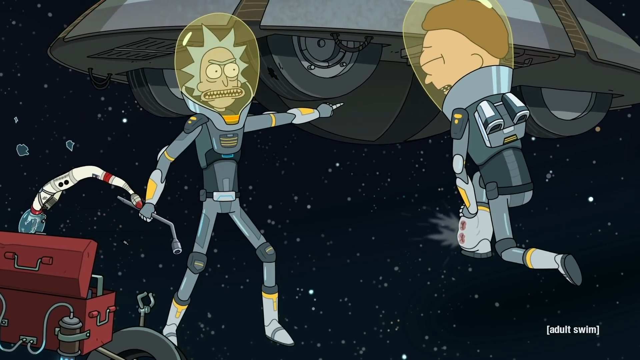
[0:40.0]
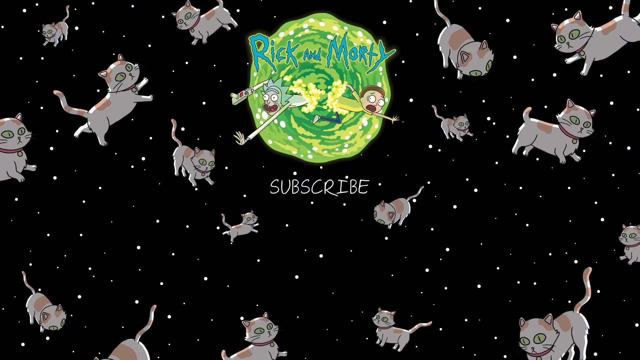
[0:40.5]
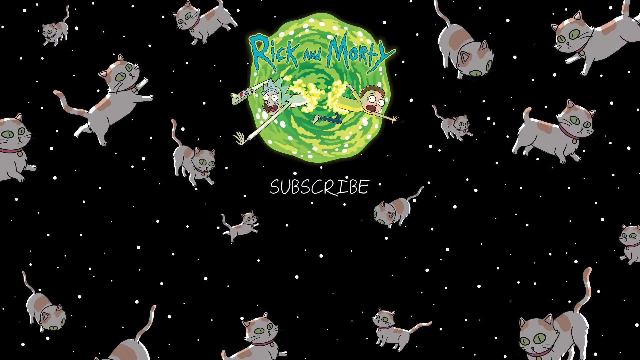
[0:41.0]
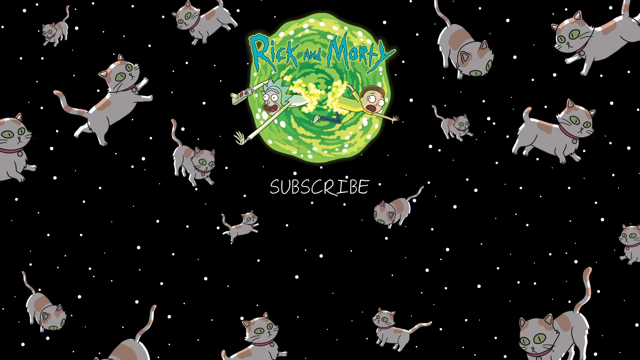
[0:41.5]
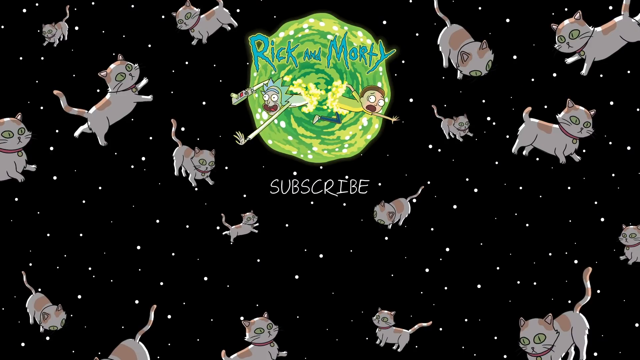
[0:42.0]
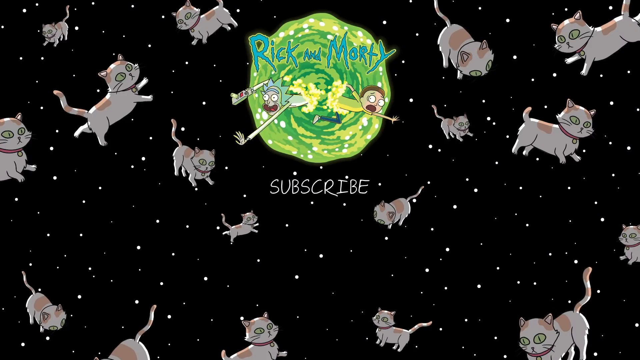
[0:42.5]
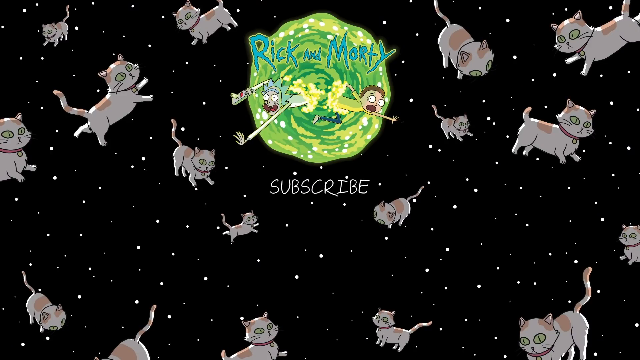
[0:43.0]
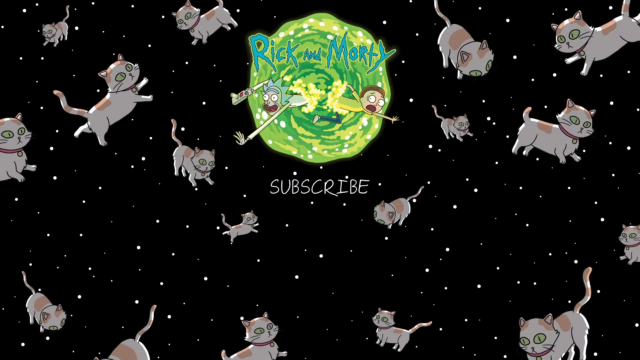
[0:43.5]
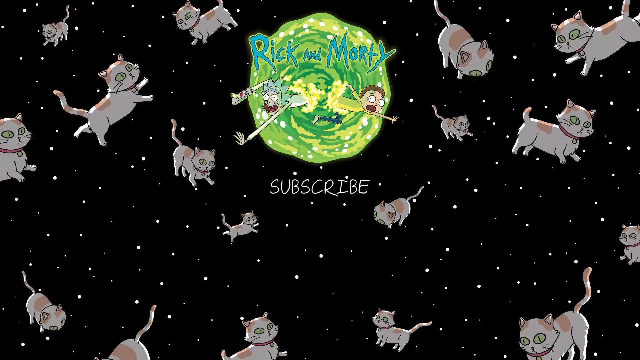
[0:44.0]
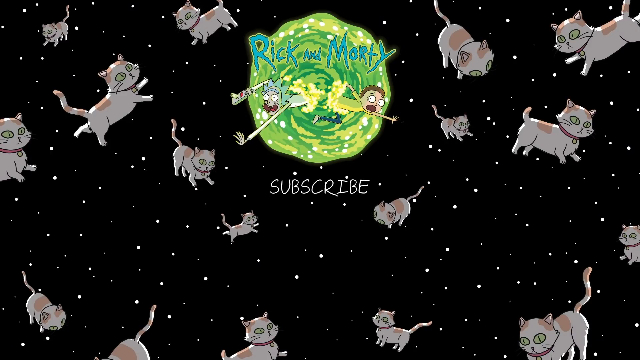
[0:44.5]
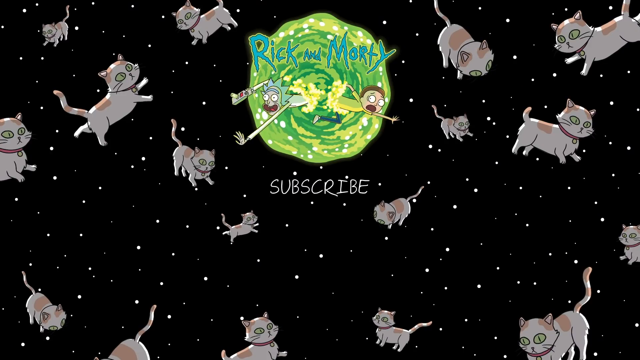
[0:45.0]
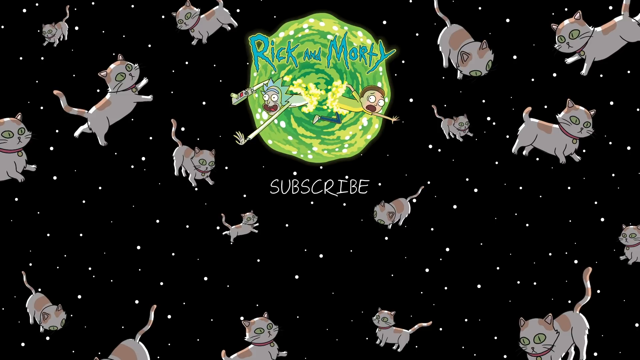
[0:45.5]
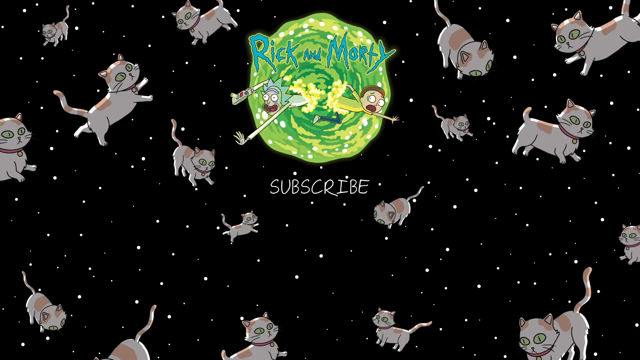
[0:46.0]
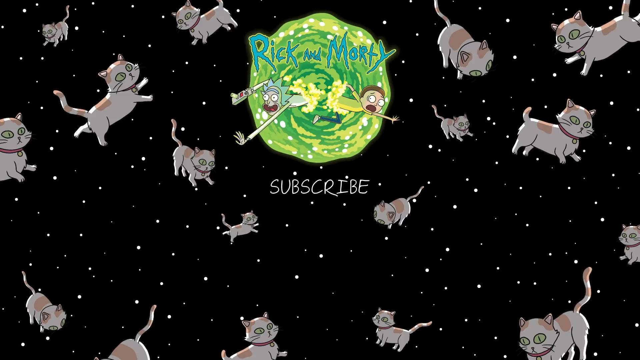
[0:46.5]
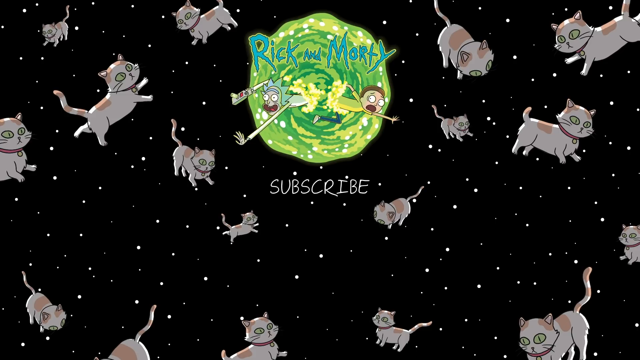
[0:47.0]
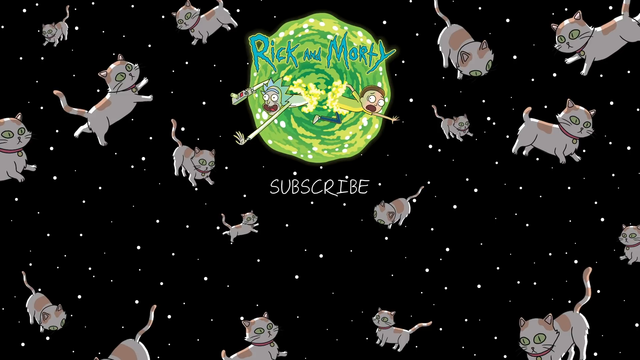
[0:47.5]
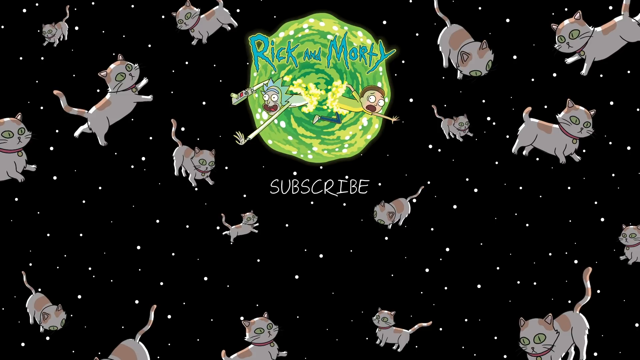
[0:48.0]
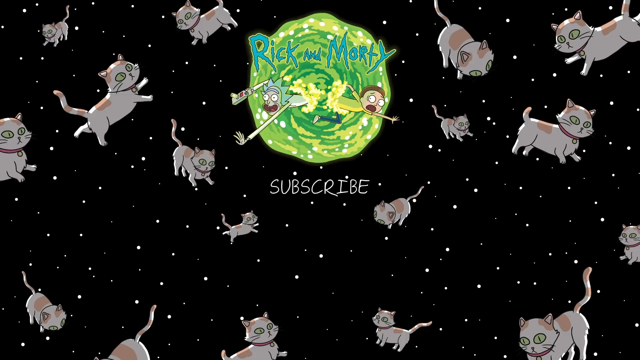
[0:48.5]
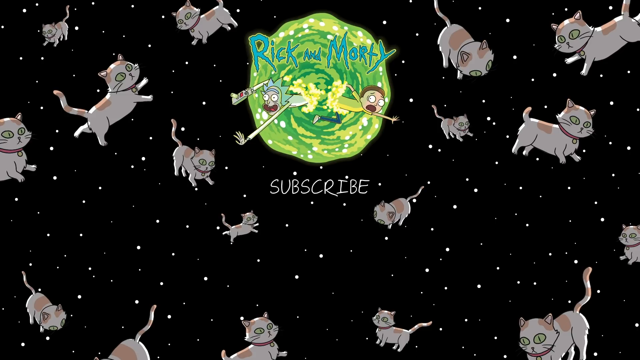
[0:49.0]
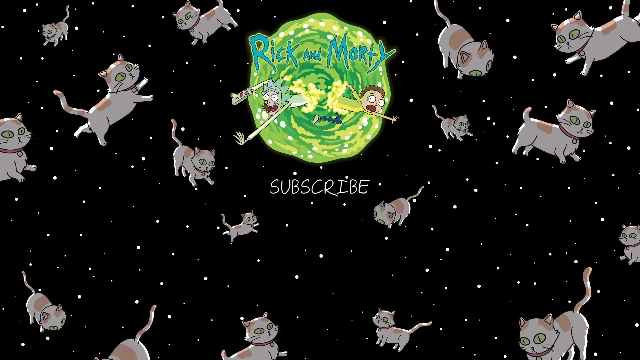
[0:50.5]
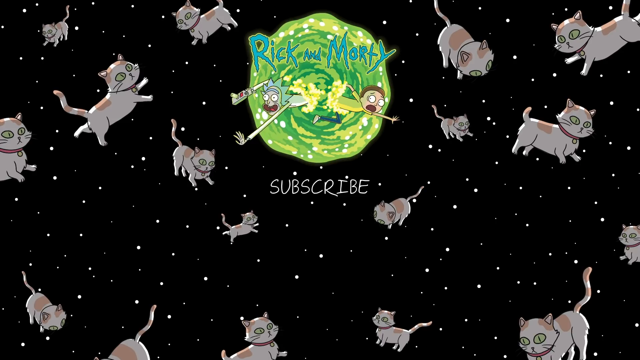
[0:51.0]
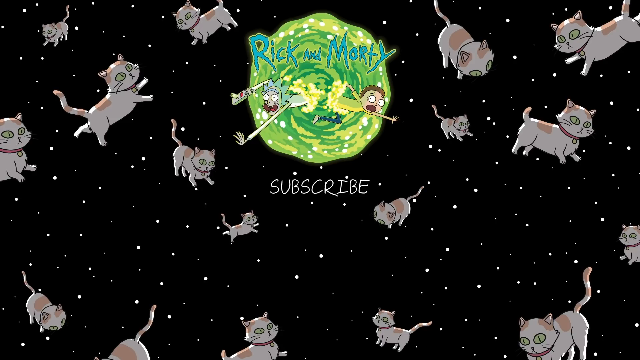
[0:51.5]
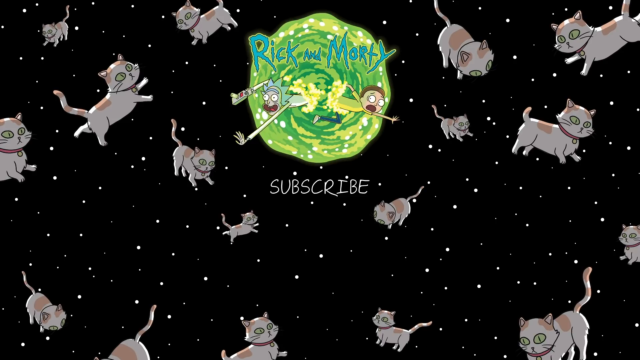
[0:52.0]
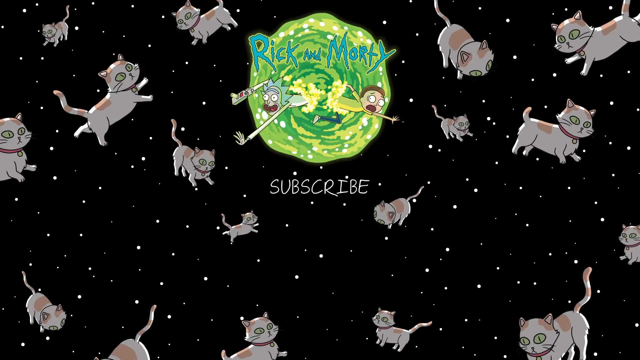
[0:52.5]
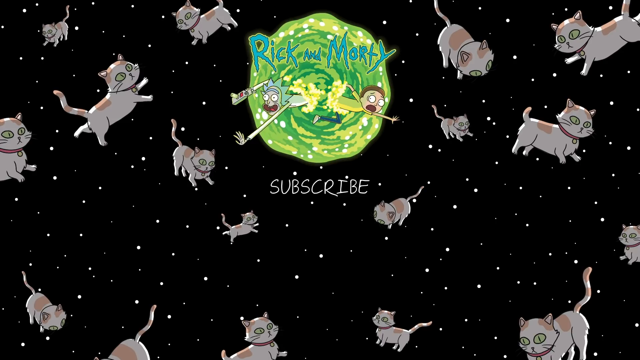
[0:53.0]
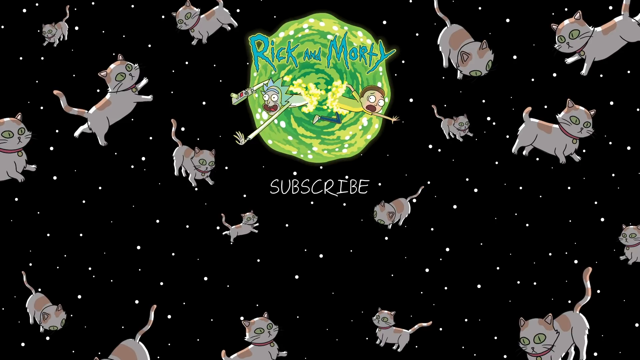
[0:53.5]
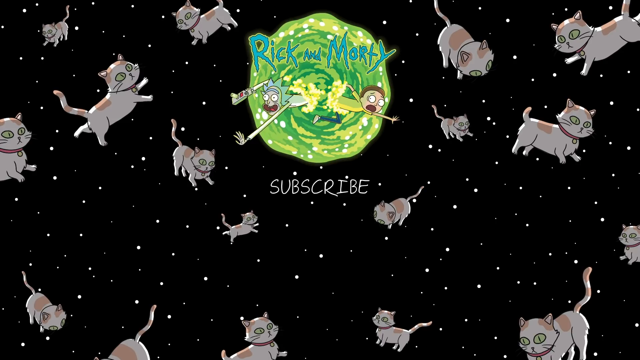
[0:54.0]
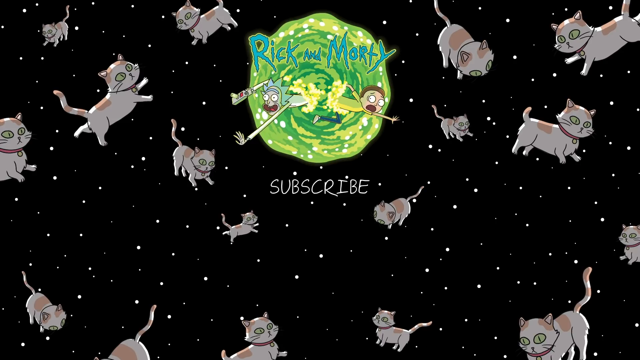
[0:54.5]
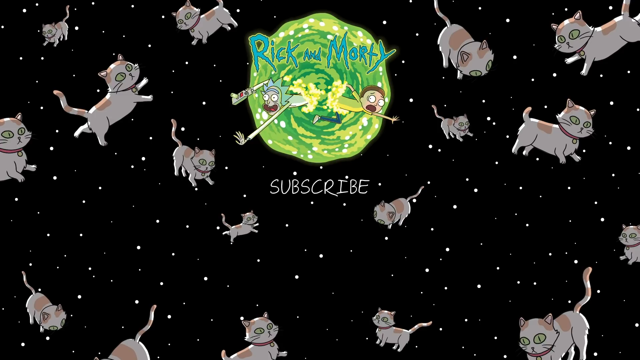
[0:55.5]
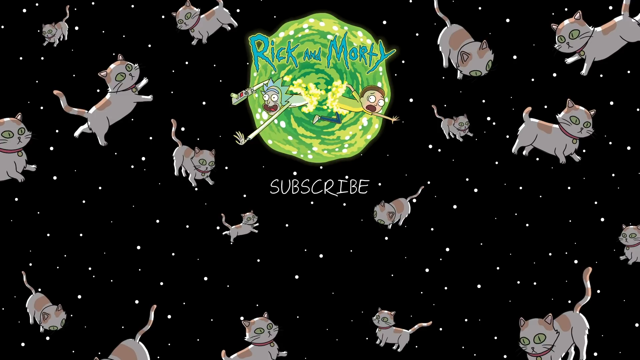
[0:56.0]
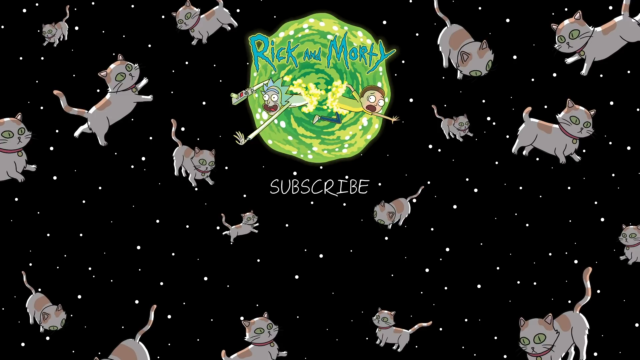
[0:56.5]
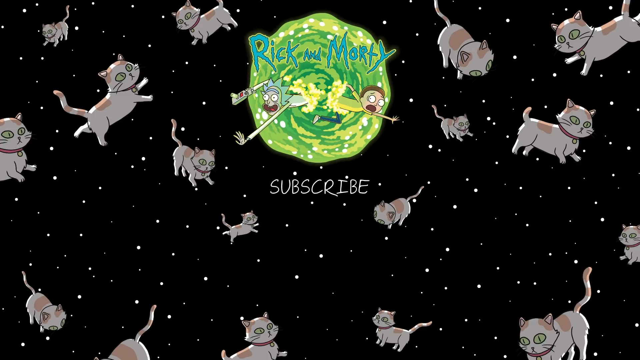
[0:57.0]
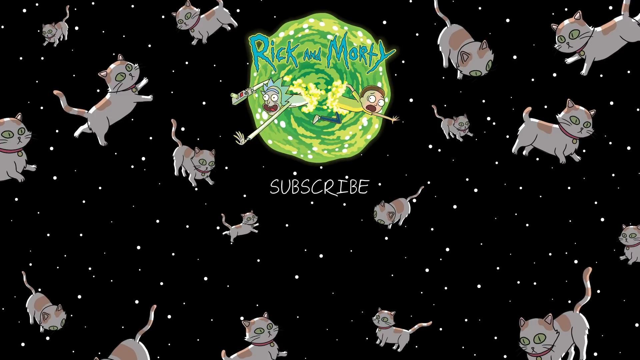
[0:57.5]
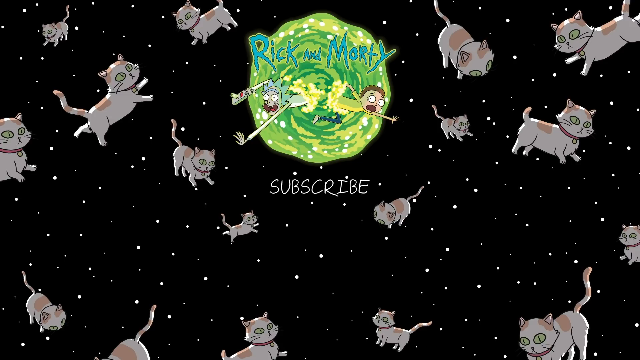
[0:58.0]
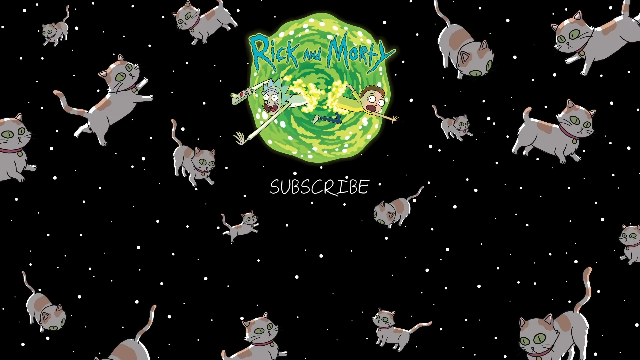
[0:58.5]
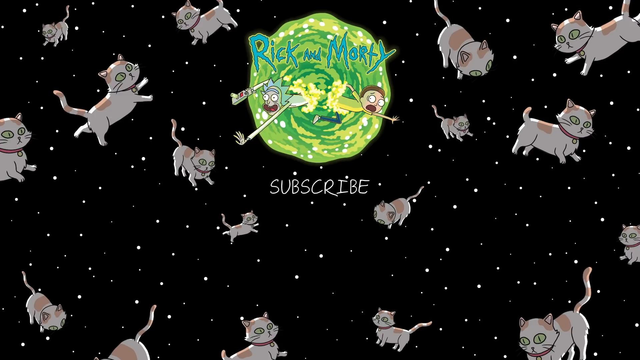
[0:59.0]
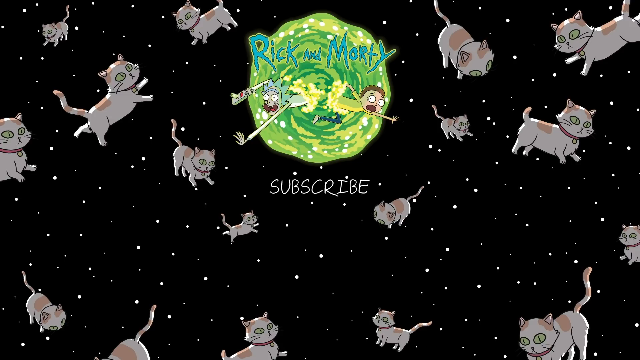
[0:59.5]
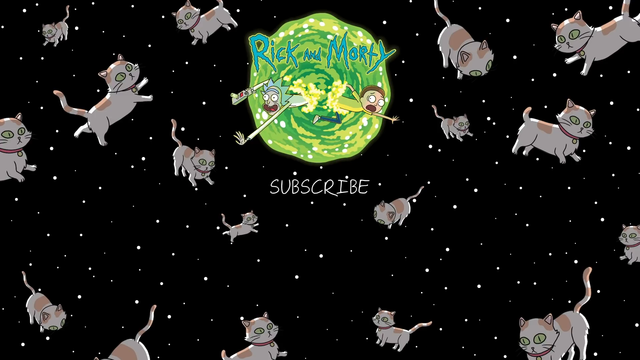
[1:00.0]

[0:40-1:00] The next screen says "subscribe" and shows many cats in outer space, all over the place, including at the bottom, with stars among the cats. An island then appears with "Rick and Morty" on it. Two characters are on the green island, leaning over it so their hands are off the land. A big green and yellow circle has "Rick and Morty" written in blue over the island.